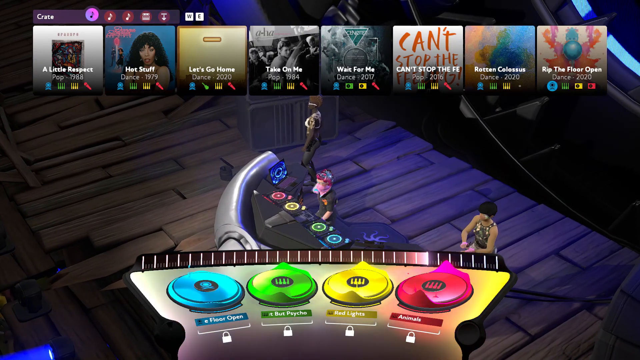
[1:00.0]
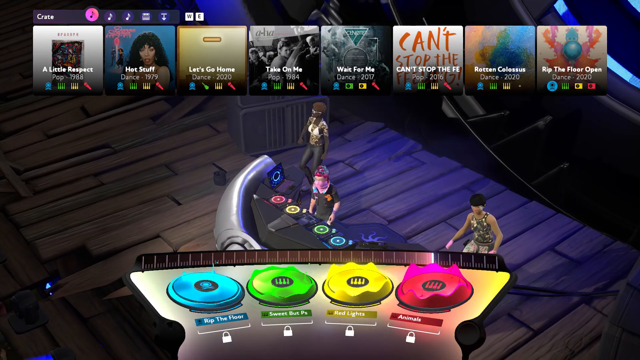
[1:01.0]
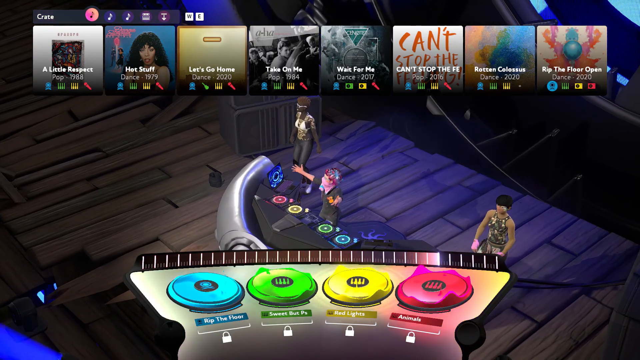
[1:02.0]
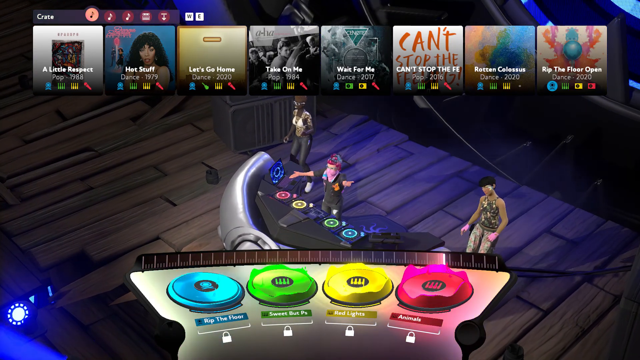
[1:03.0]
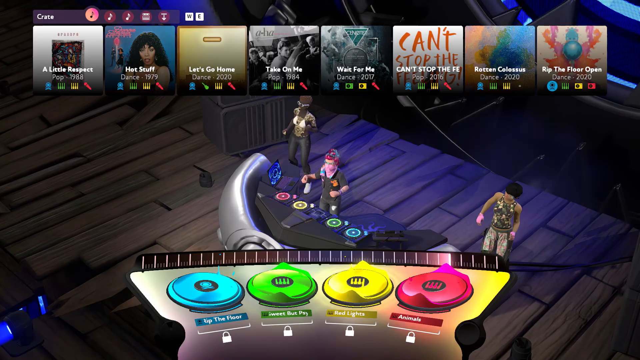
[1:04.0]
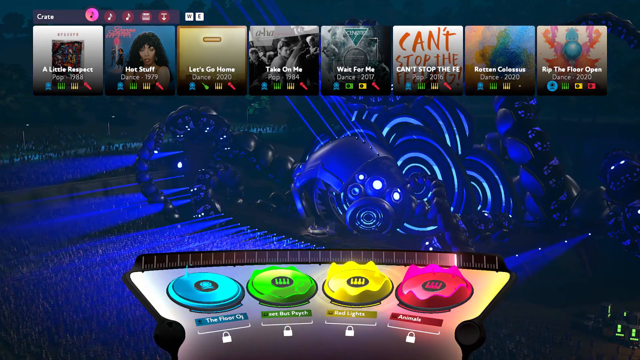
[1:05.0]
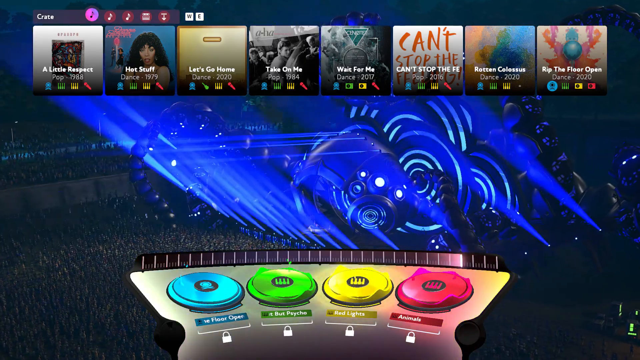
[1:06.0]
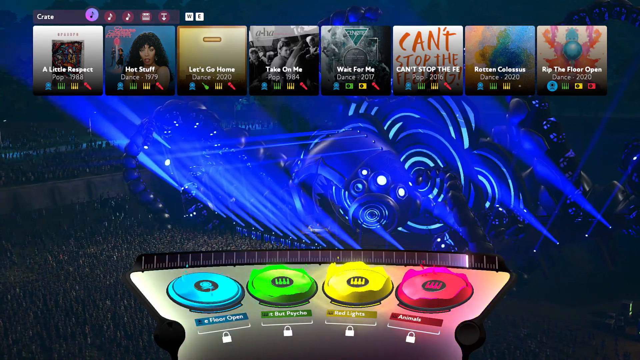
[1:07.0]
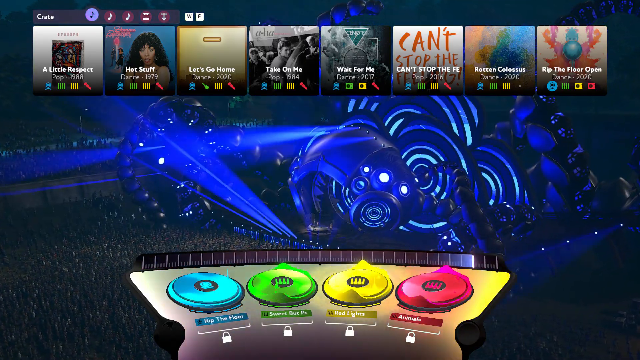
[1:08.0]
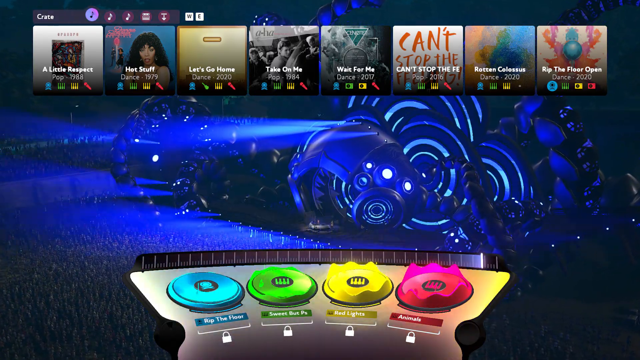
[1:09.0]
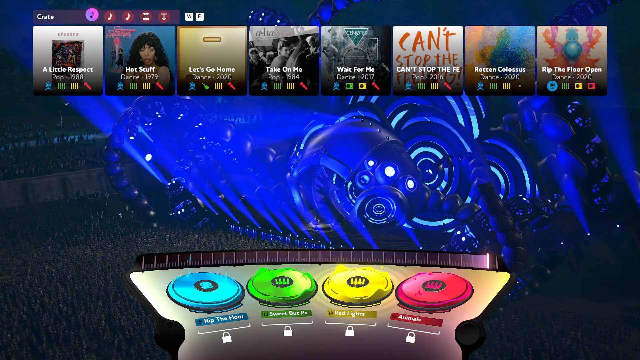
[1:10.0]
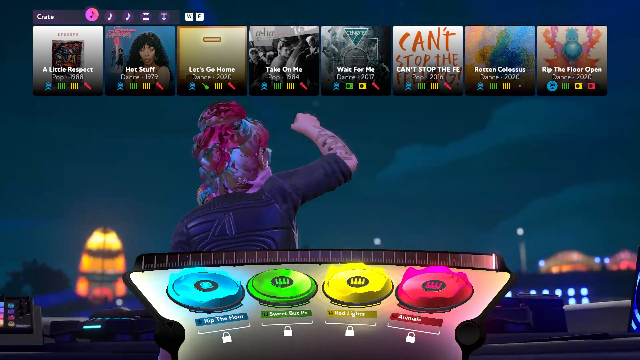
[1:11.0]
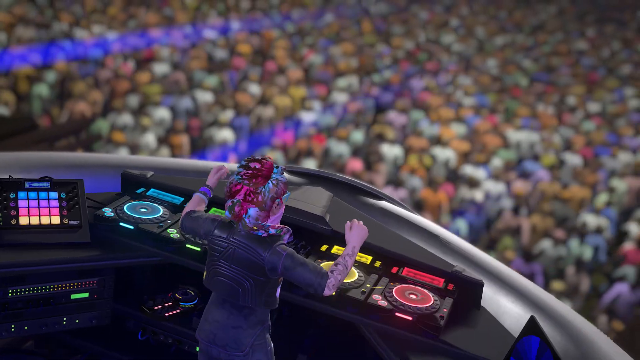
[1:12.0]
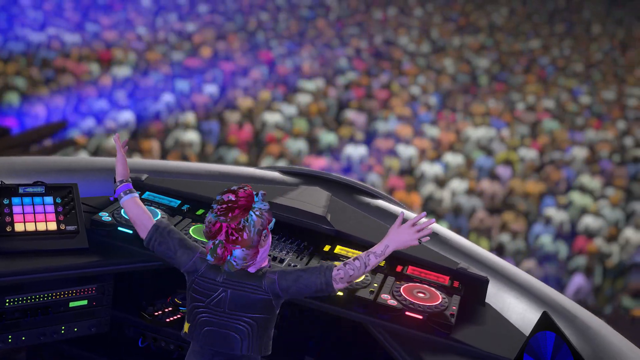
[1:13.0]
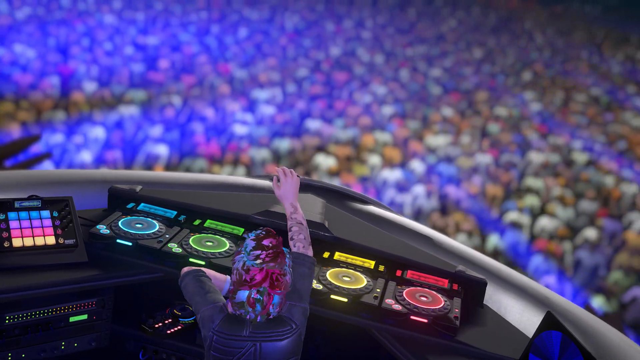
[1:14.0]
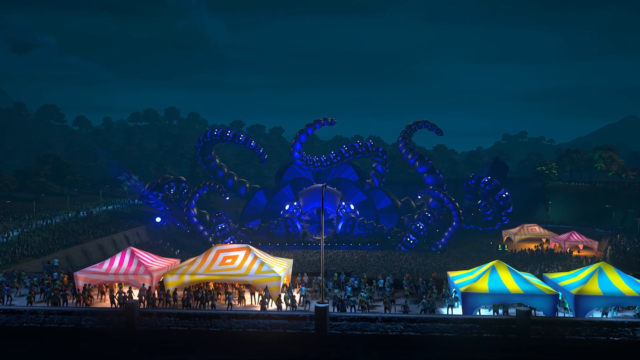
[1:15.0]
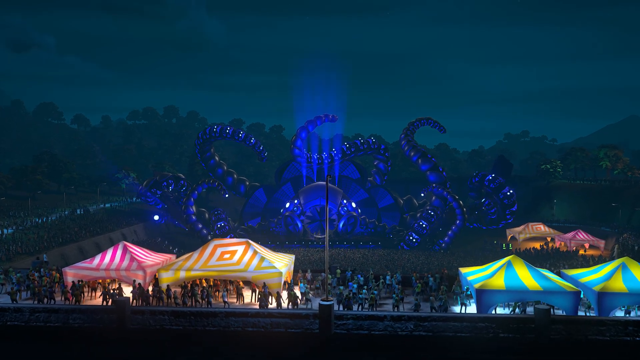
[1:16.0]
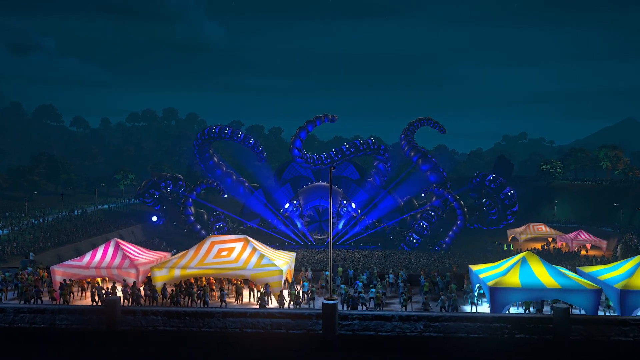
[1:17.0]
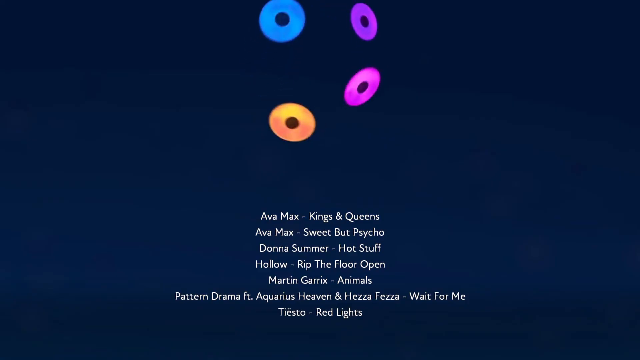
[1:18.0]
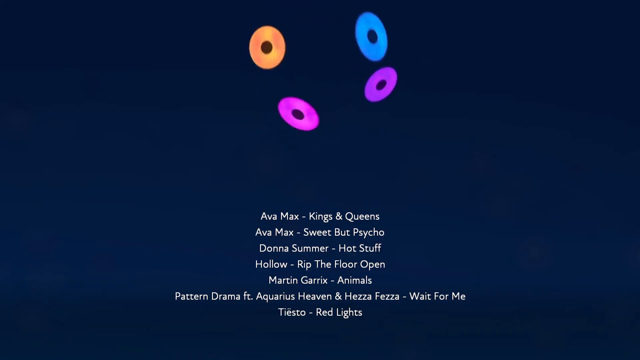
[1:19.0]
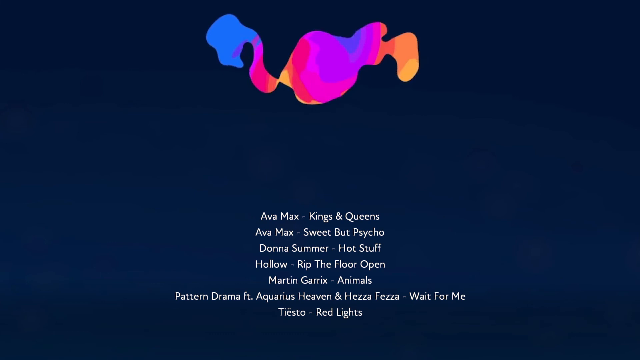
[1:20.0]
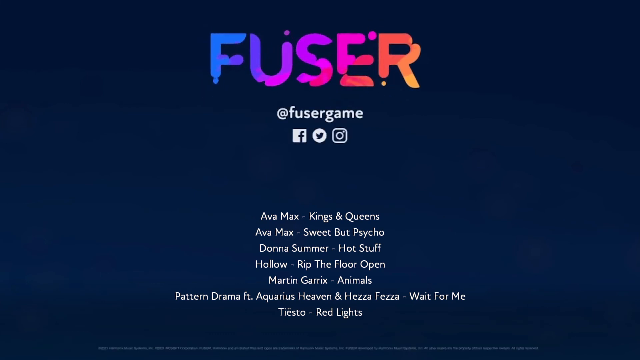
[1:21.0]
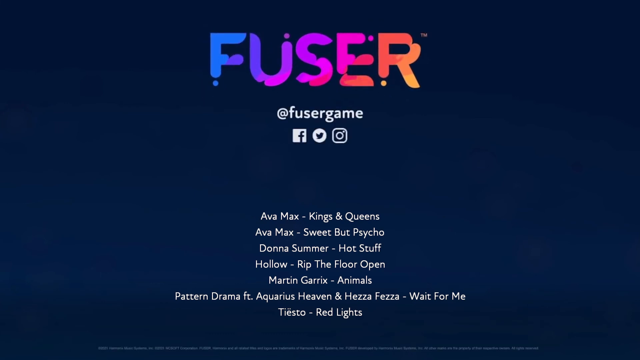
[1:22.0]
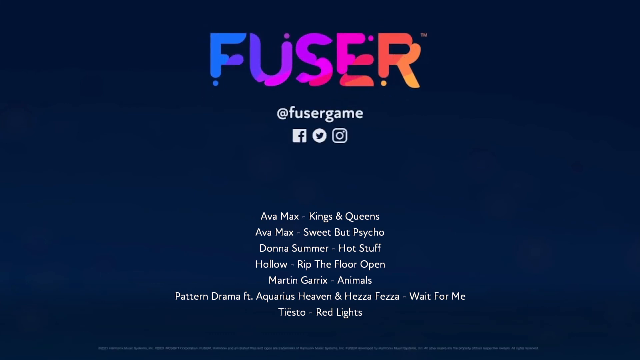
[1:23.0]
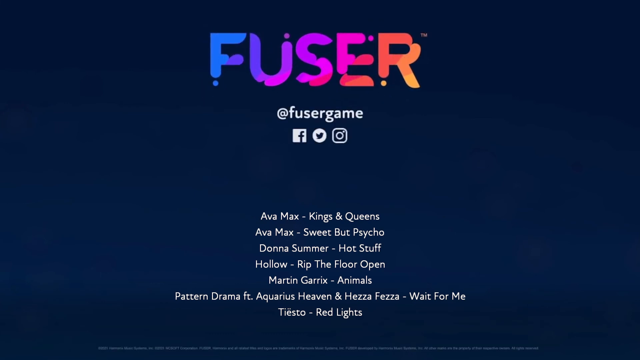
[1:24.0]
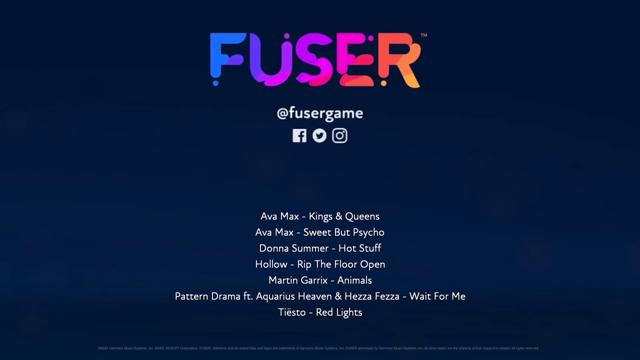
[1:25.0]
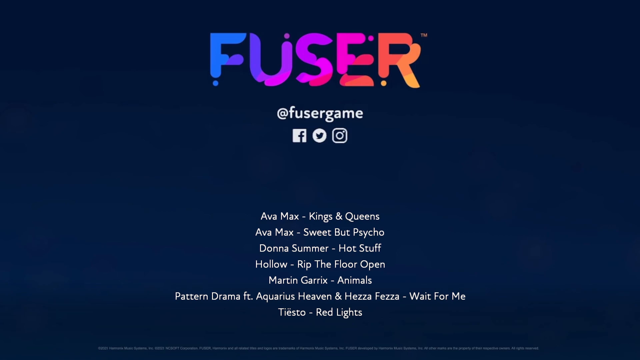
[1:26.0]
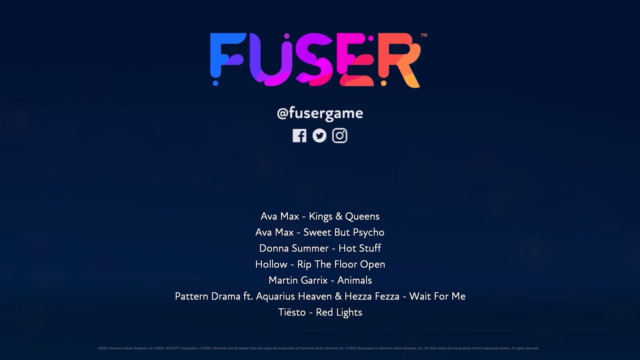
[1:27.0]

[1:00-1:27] The same songs are still listed: "a little respect", "hot stuff", "let's go home", "take on me", "wait for me", "can't stop the feeling", one title too small to read, and "rip the floor open". Three people are by the DJ area: one is the DJ, hyping people up with hands raised in the air; one is painted completely black; the third is not really shown. The view then shifts to the DJ's angle, showing a crowd of thousands of people. Text reads "F-U-S-E-R" and then "@F-U-S-E-R", apparently a social media handle, and under the handle is a list of songs or artists, including Ava Max.